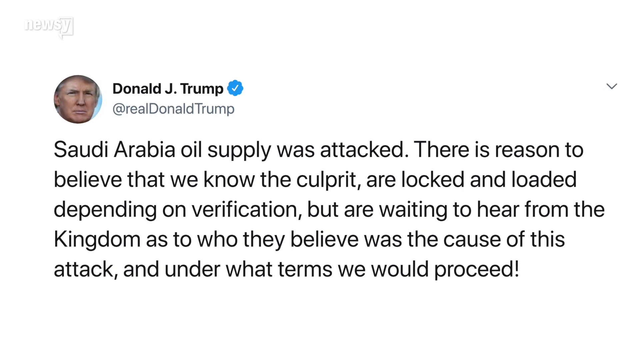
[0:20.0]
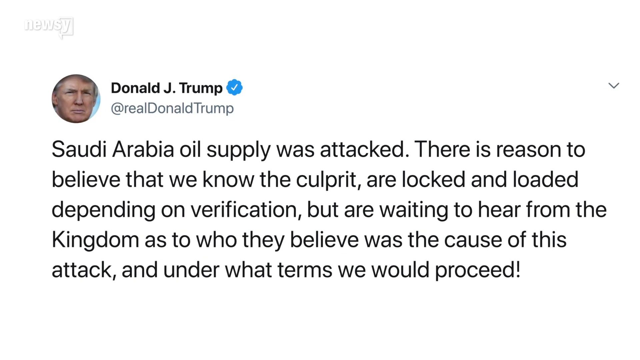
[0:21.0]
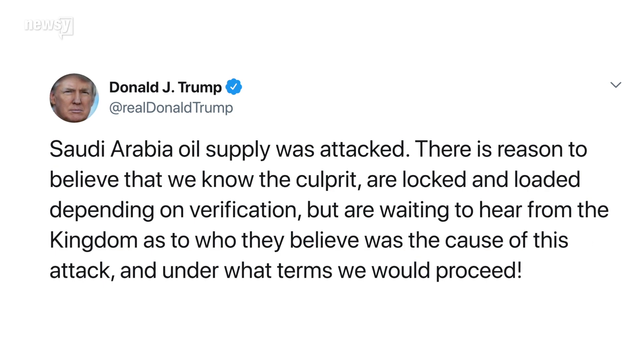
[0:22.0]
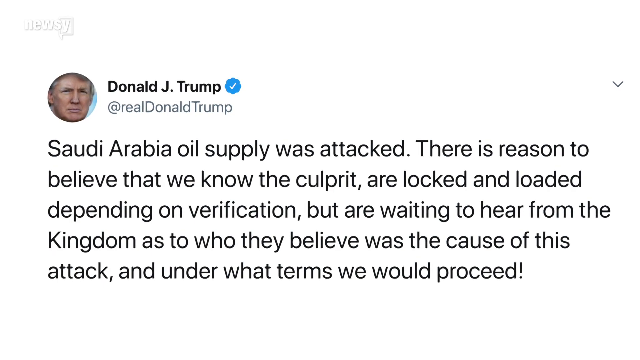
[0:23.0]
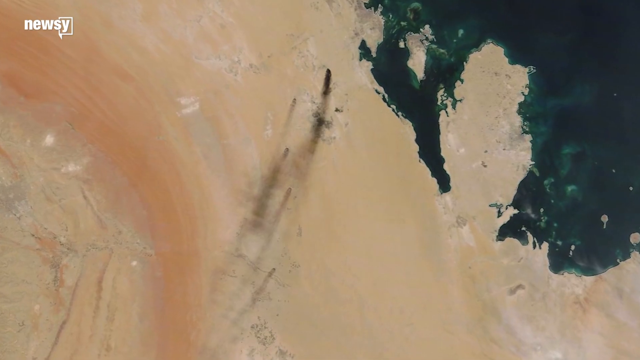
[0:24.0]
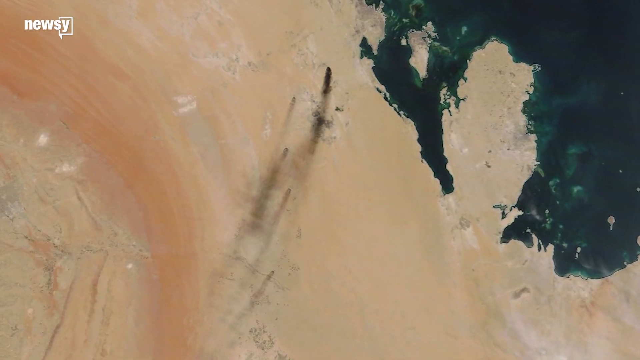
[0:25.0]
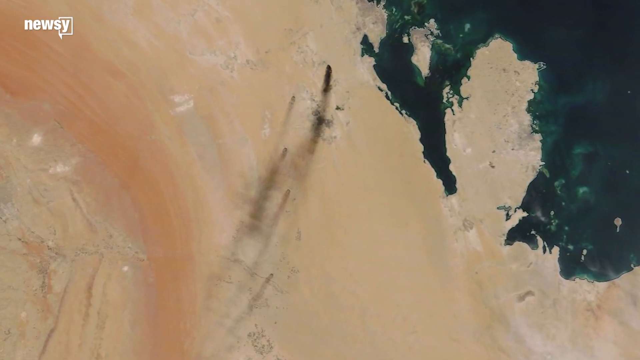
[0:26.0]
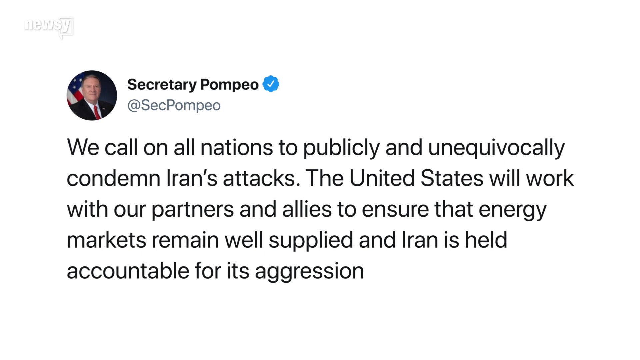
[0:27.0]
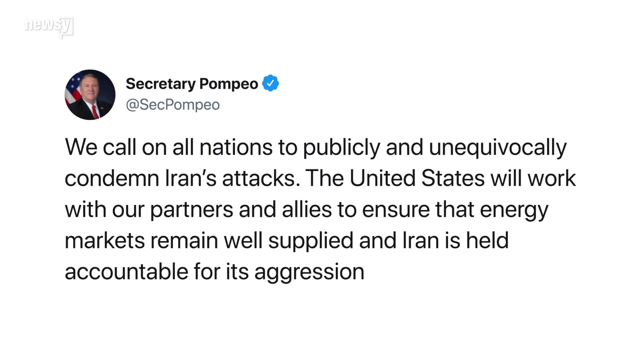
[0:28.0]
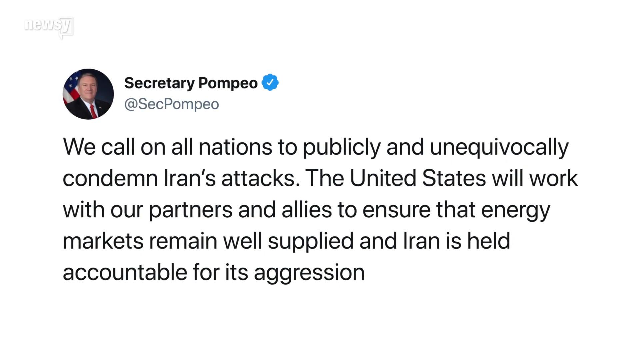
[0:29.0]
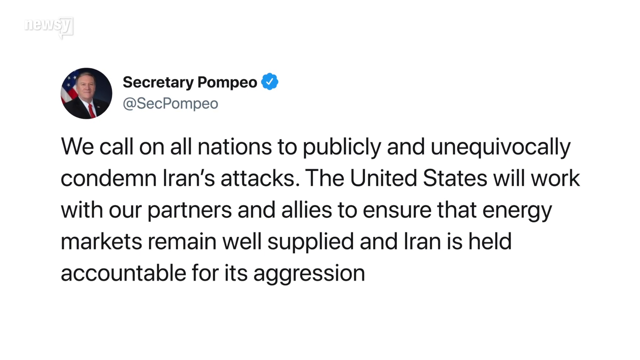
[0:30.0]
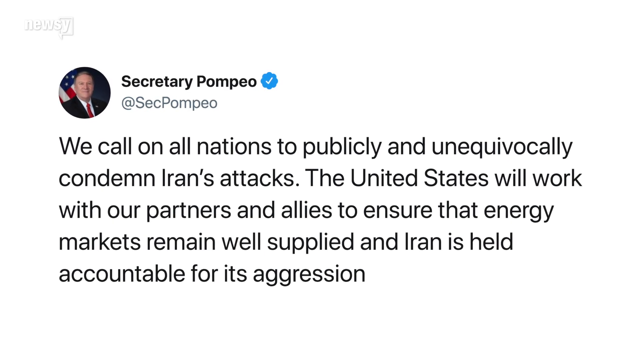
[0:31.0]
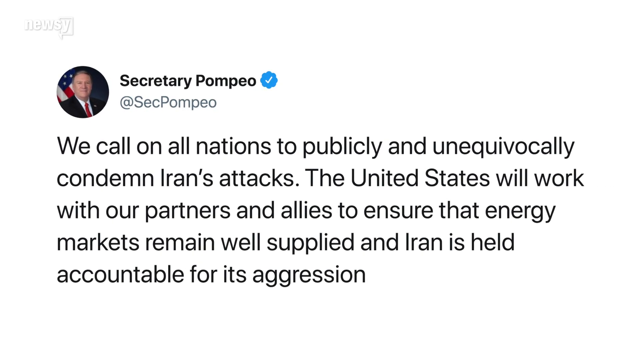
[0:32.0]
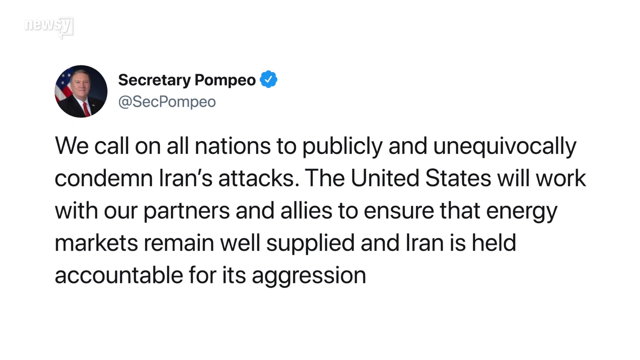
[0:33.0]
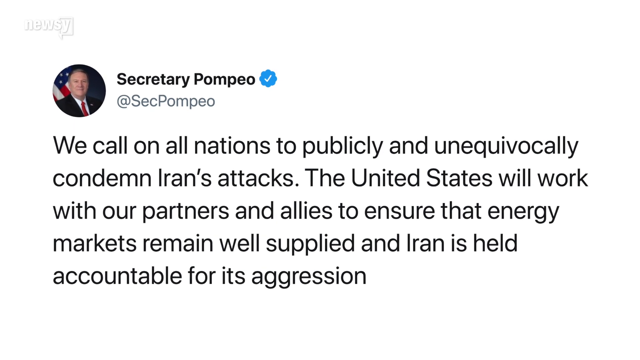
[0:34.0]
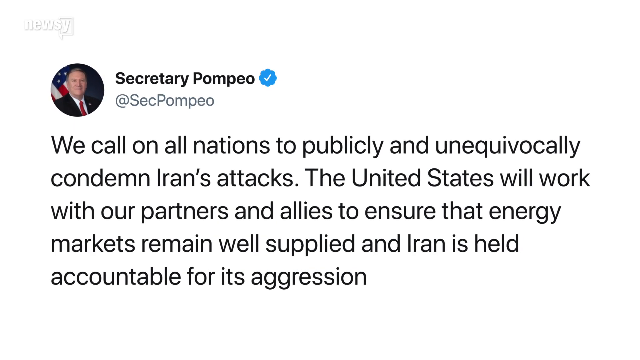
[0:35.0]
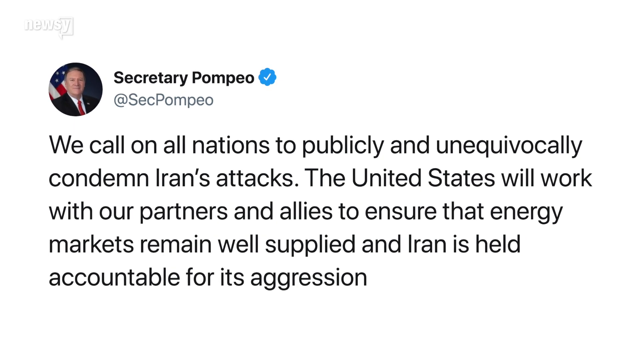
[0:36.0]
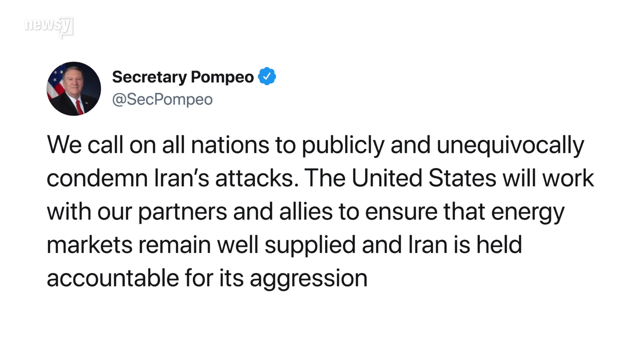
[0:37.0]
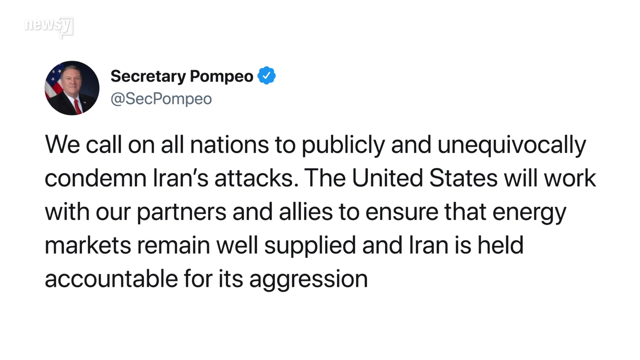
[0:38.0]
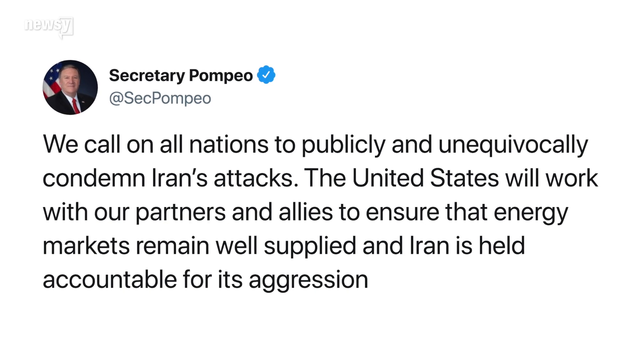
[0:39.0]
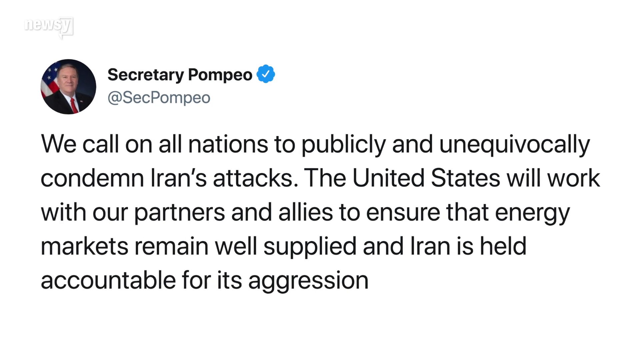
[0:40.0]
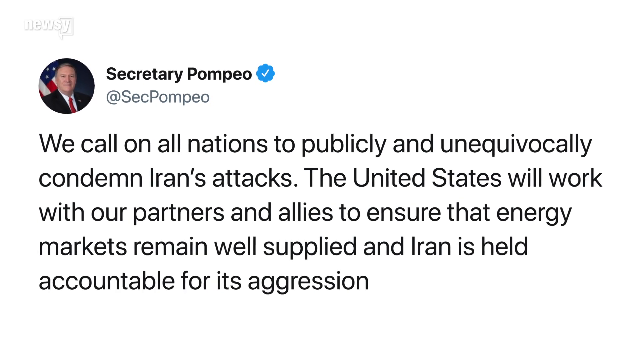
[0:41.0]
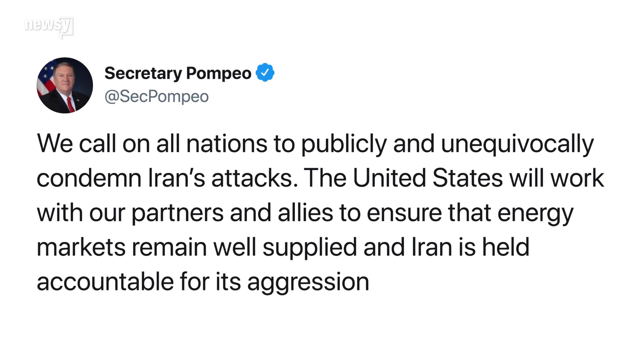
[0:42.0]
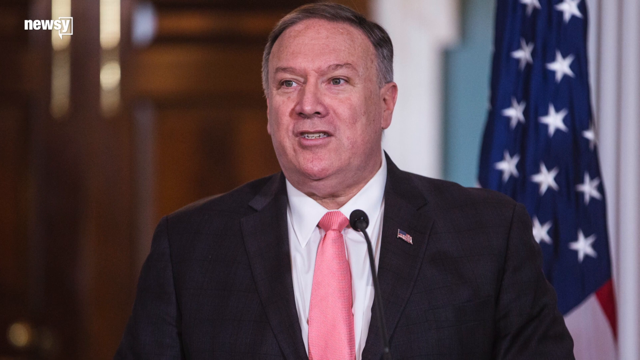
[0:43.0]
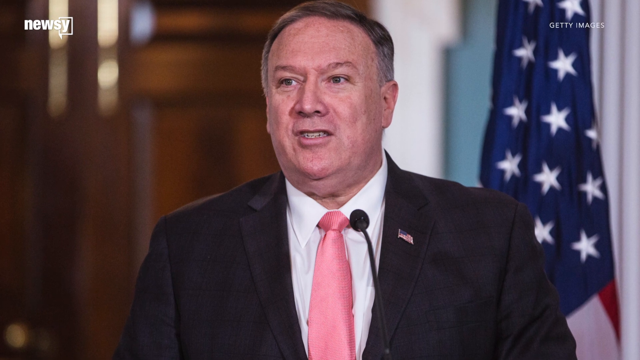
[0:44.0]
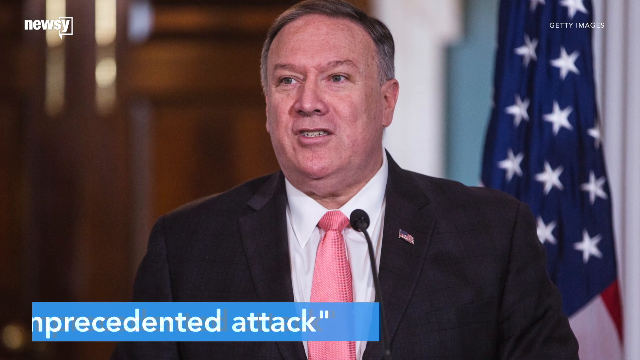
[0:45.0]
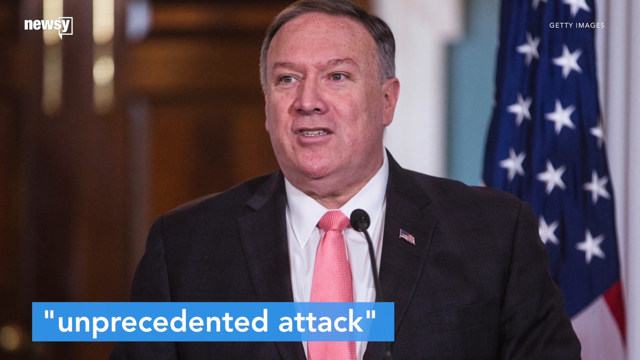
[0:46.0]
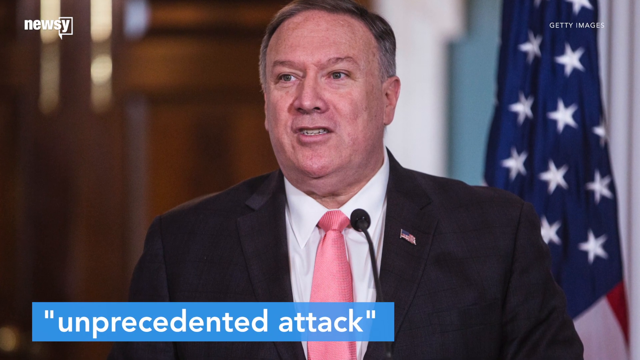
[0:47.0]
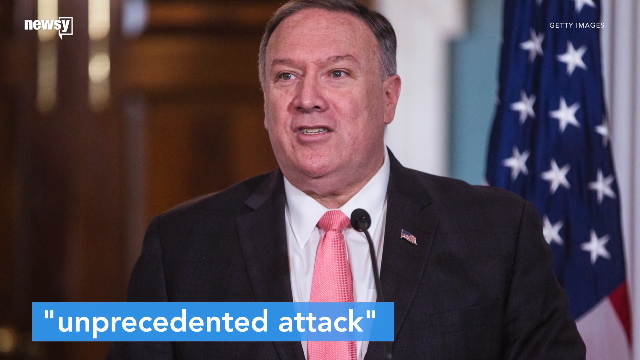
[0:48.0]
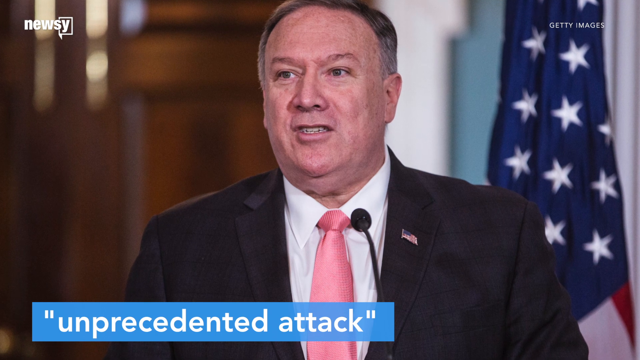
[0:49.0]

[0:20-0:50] Trump's tweet is on screen, and the video zooms in on it a little, subtly. Next comes what looks like a satellite picture of the Gulf area in the Middle East. A tweet from Secretary Pompeo then appears, with no date shown, reading: "We call on all nations to publicly and unequivocally condemn Iran's attacks. The United States will work with our partners and allies to ensure that energy markets remain well supplied and Iran is held accountable for its aggression." The tweet is in black sans-serif text on a white background, and the video zooms in very subtly on it. A photo of Secretary Pompeo follows.